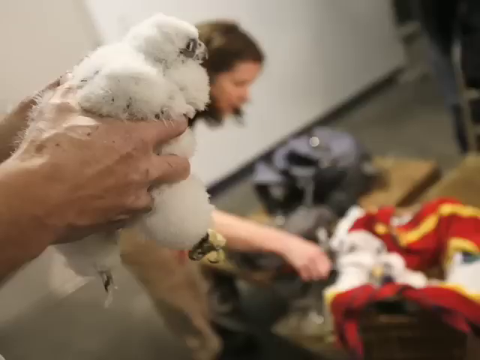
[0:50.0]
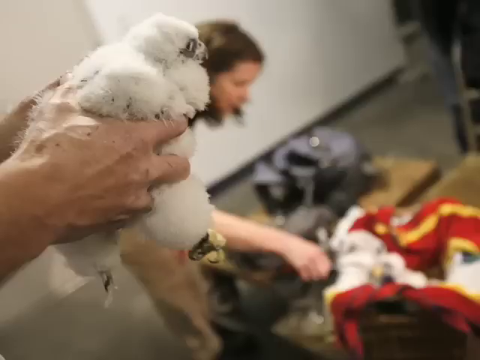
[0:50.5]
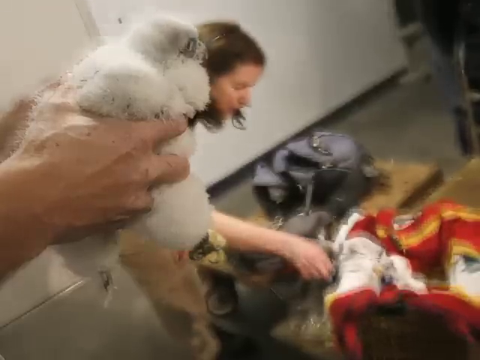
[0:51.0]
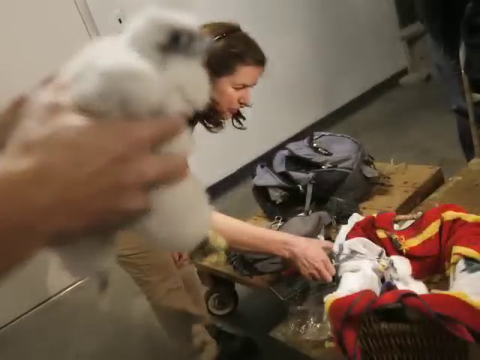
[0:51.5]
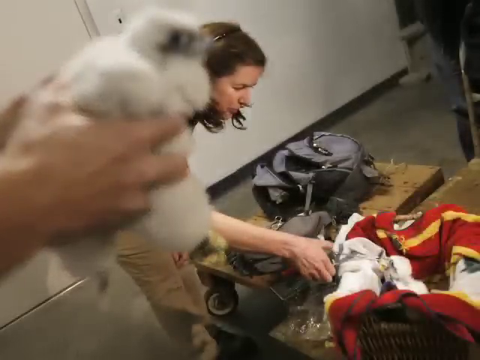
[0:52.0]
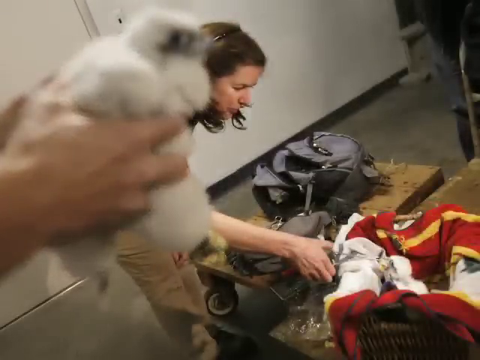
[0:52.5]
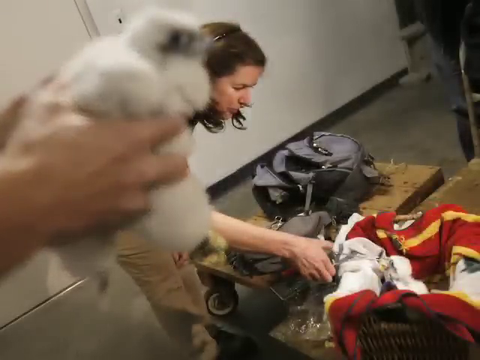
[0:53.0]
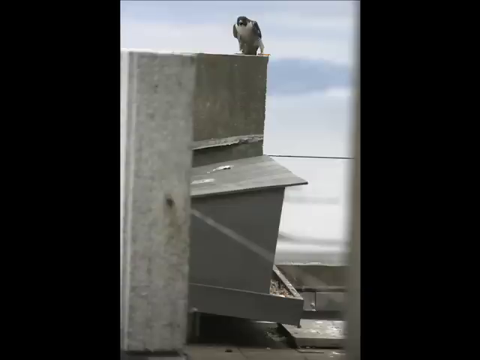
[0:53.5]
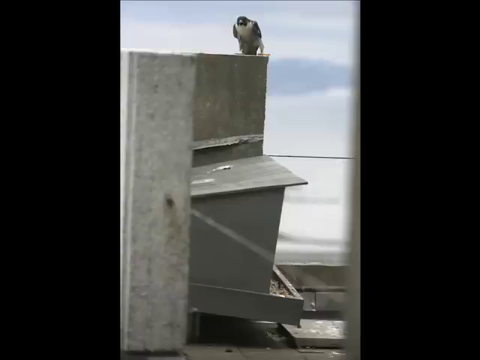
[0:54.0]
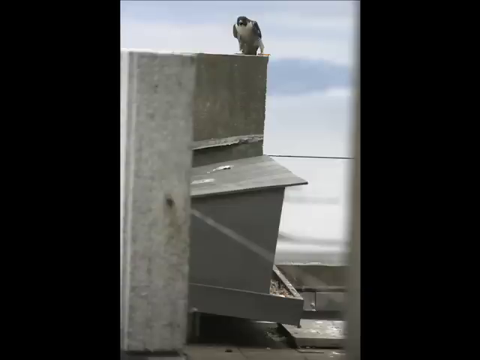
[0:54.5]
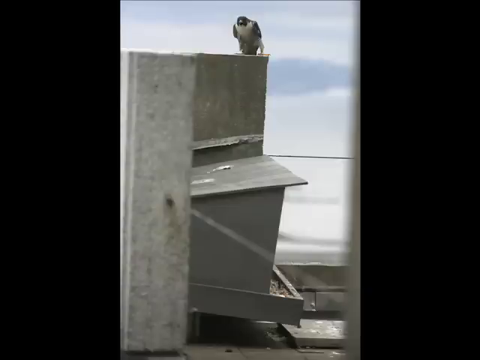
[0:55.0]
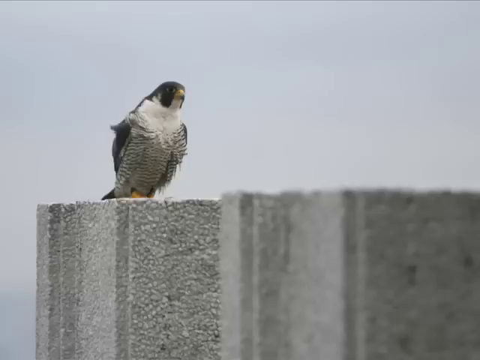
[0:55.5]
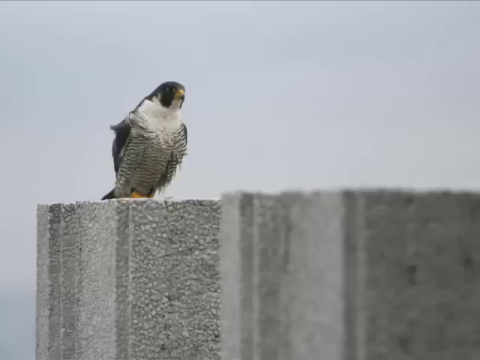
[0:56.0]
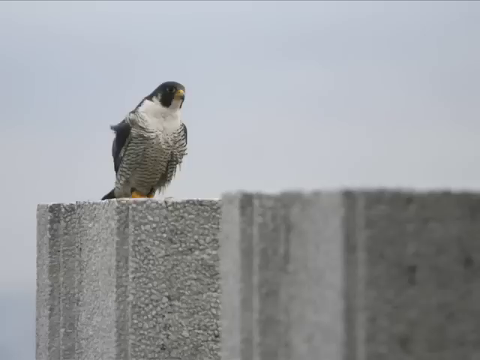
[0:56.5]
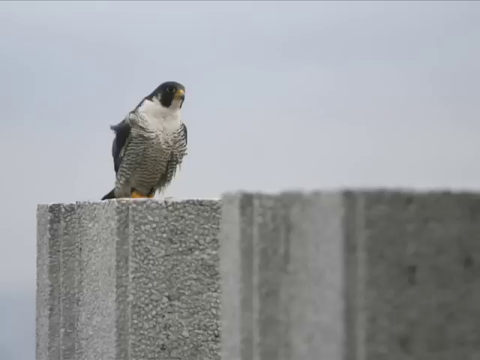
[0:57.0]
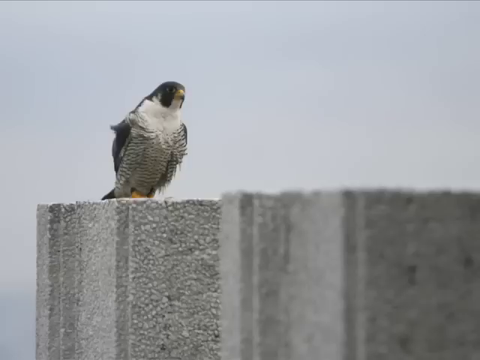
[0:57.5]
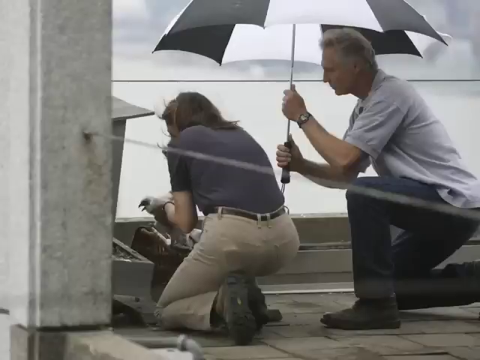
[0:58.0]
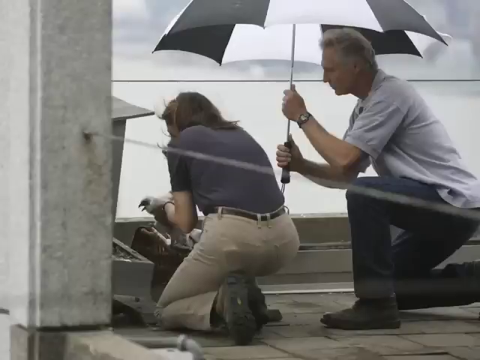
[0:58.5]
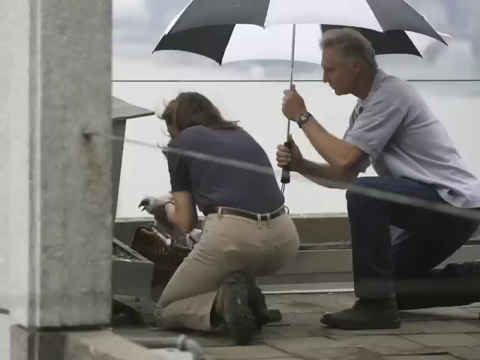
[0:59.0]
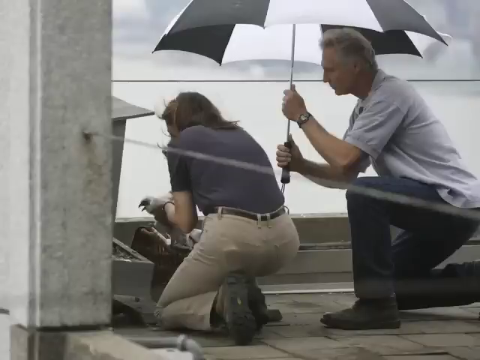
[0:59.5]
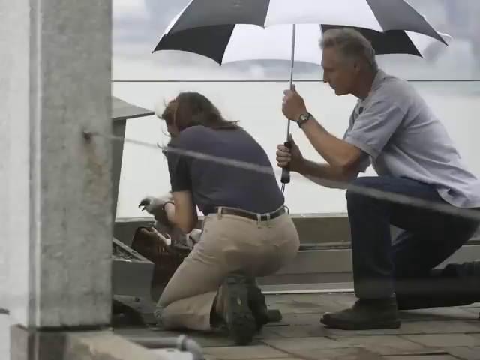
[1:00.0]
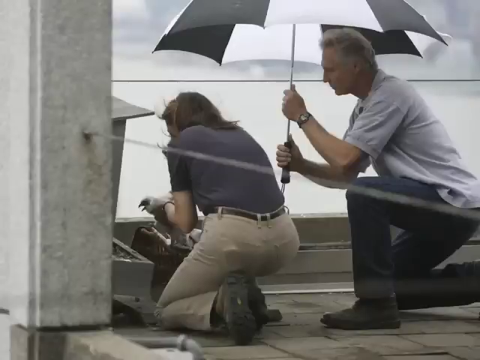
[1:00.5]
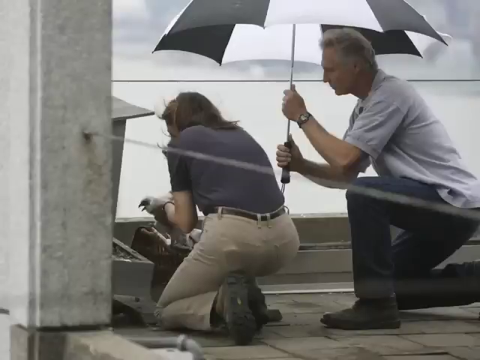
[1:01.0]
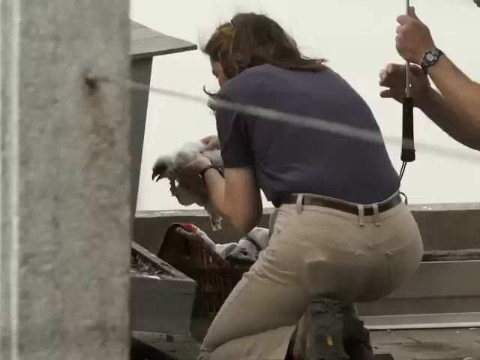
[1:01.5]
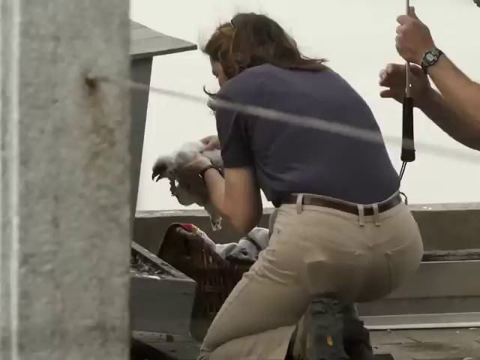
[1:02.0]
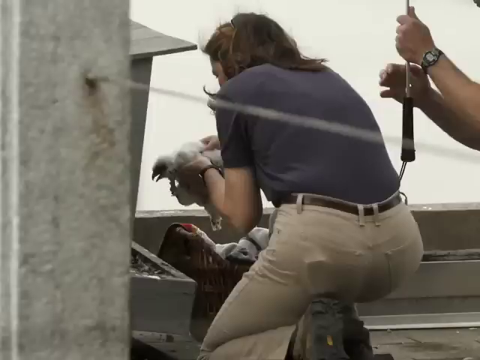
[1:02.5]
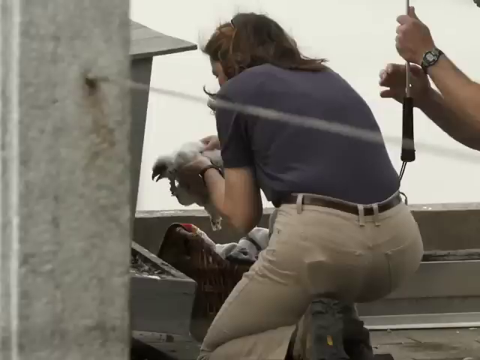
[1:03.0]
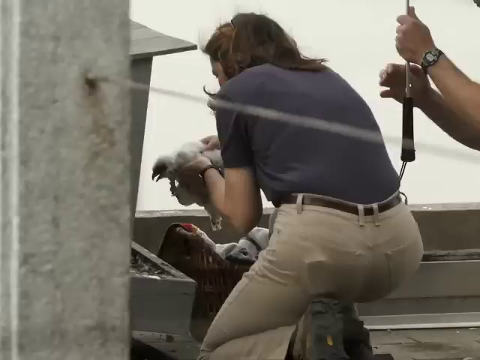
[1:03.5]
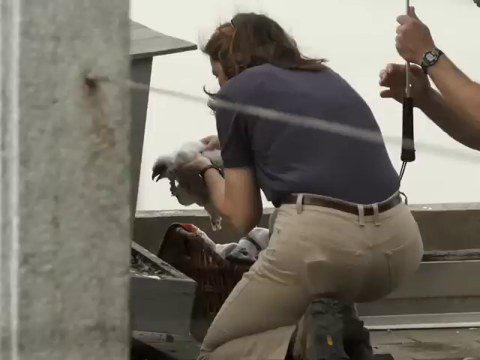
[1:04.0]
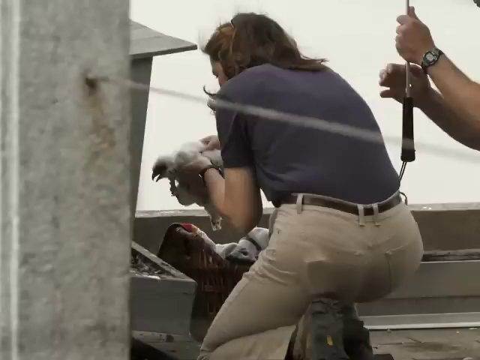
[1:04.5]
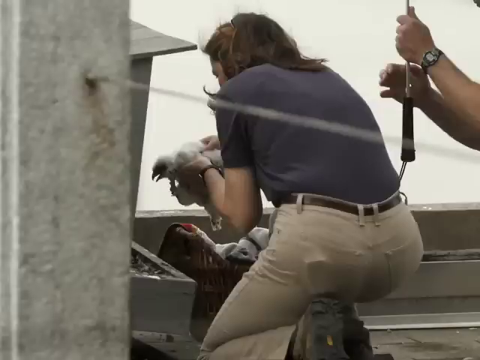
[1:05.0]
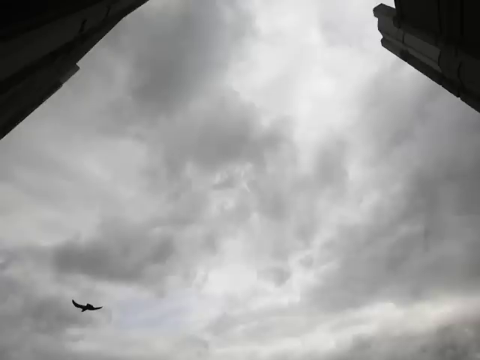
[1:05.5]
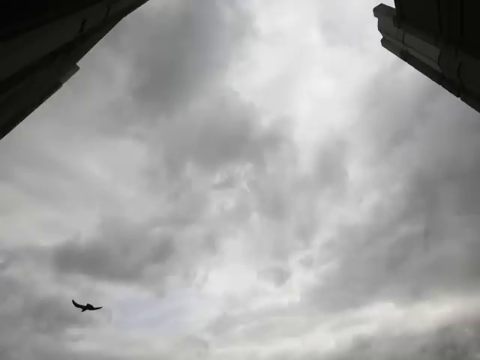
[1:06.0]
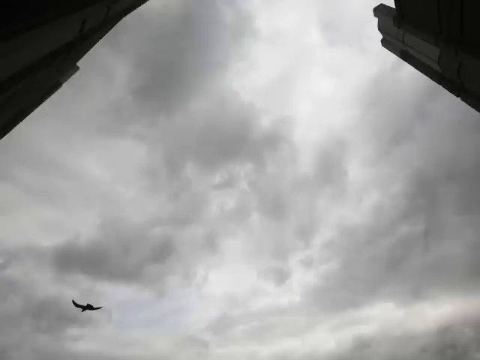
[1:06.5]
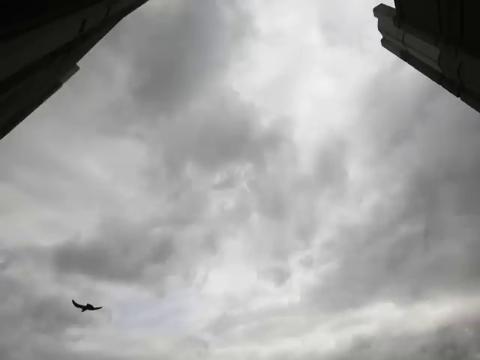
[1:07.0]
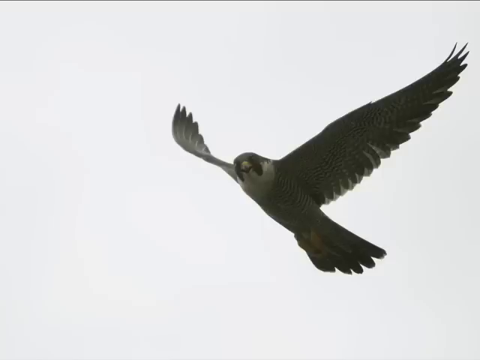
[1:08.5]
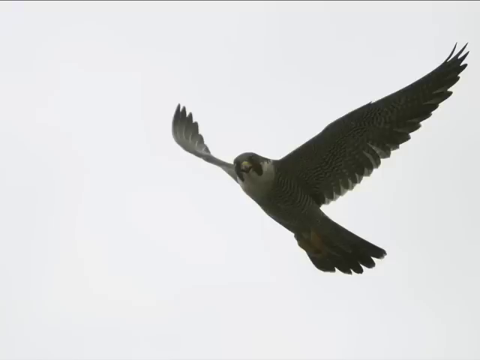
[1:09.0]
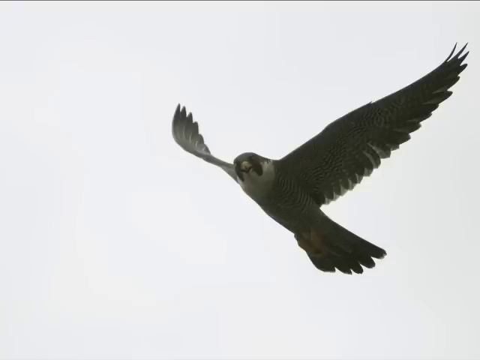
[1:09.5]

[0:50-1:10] A hand holds one of the chicks while a woman in the slightly blurred background attends to the other chick in the colourful towel basket. A shot then shows one of the adult falcons on top of some brickwork, in portrait orientation and quite far away, with the sky in the background; the bird is on some kind of object on top of a building. A more professional-looking photograph follows, showing a bird slightly left of centre on top of some brick with an almost bokeh effect; its beak and patterned breast are visible. Two of the people then take the chicks back to where they got them from: the woman picks one up and takes it out of the basket while the man behind her holds an umbrella covering both of them. A close-up shows the woman removing one of the chicks from the basket, followed by an aerial shot of the main falcon and then a close-up of it with its wings, up in the clouds.